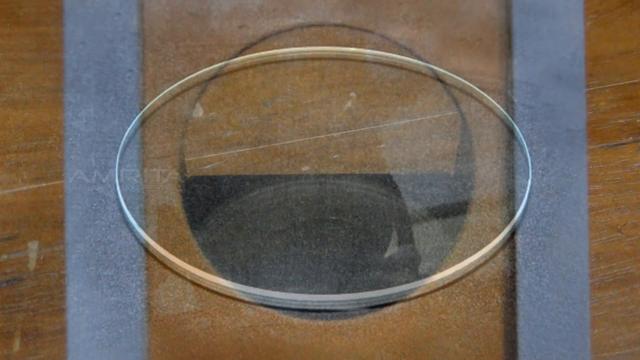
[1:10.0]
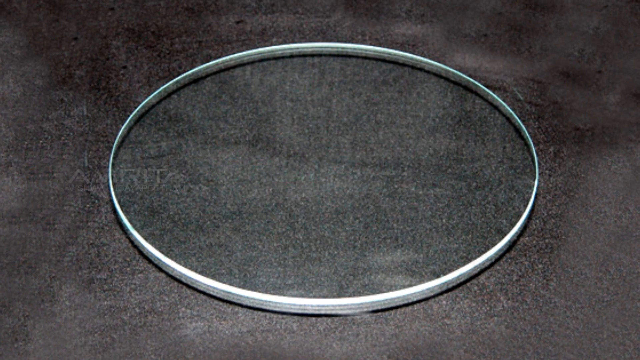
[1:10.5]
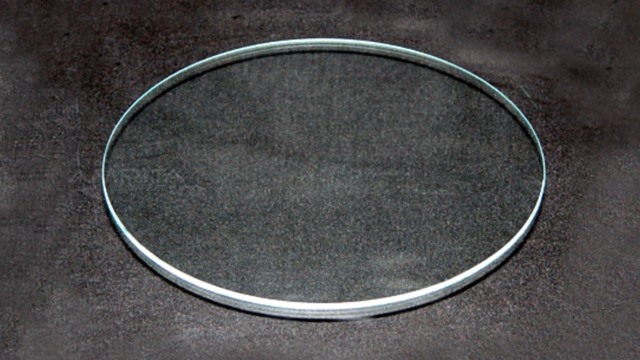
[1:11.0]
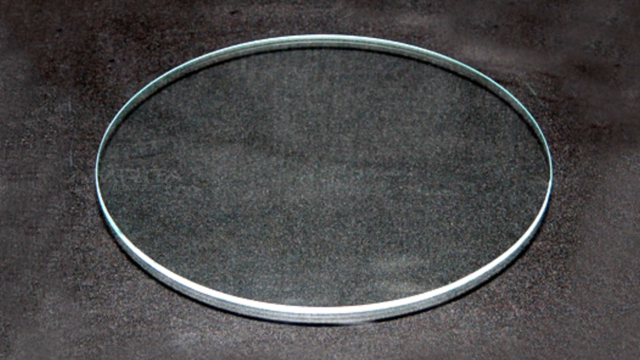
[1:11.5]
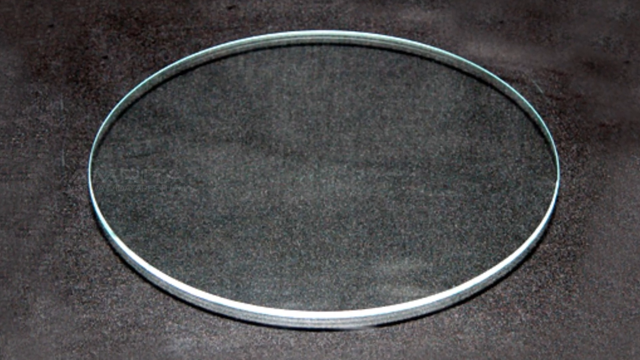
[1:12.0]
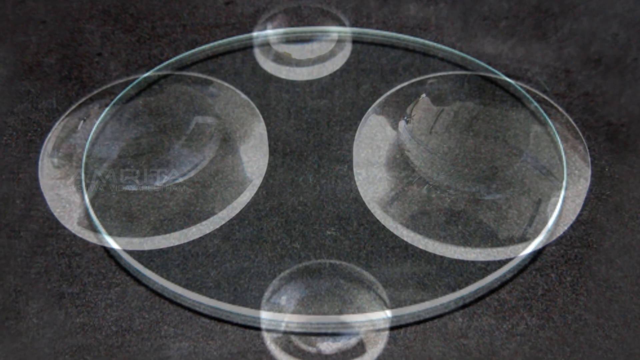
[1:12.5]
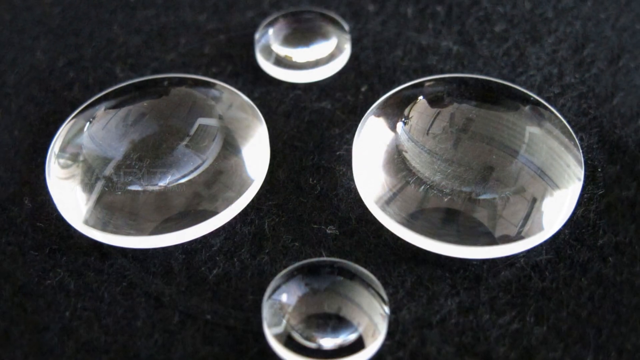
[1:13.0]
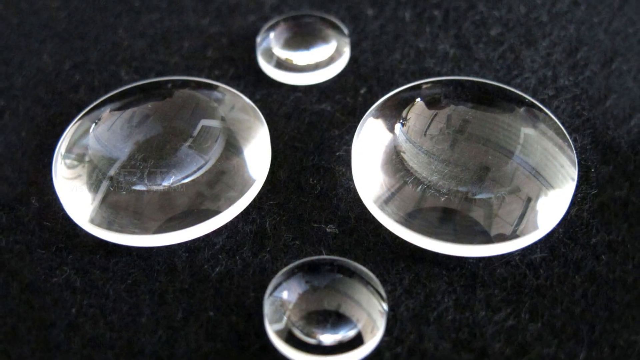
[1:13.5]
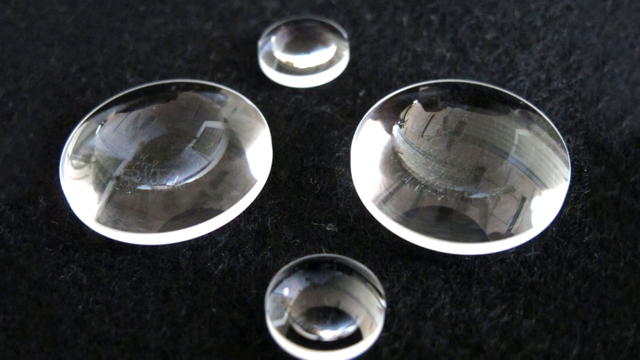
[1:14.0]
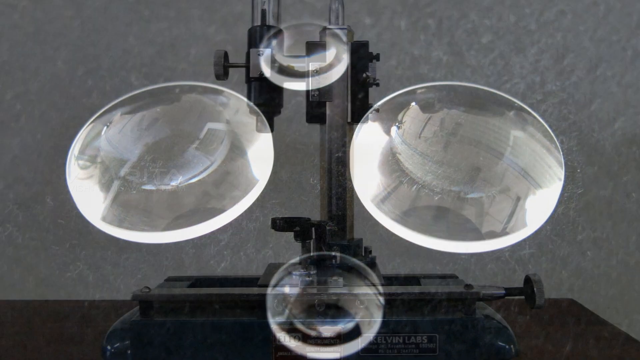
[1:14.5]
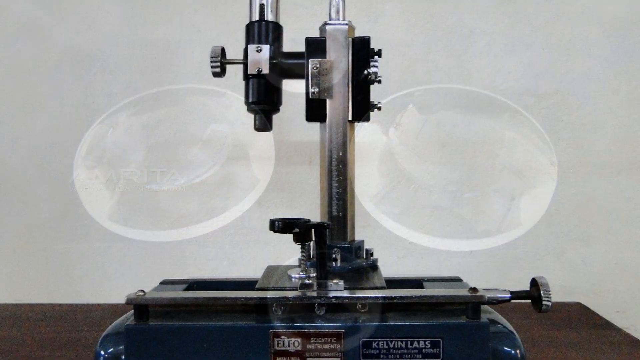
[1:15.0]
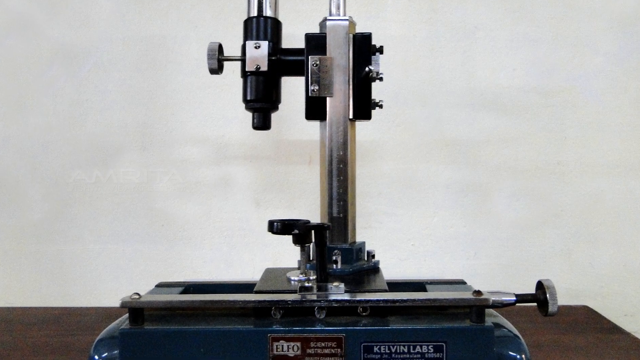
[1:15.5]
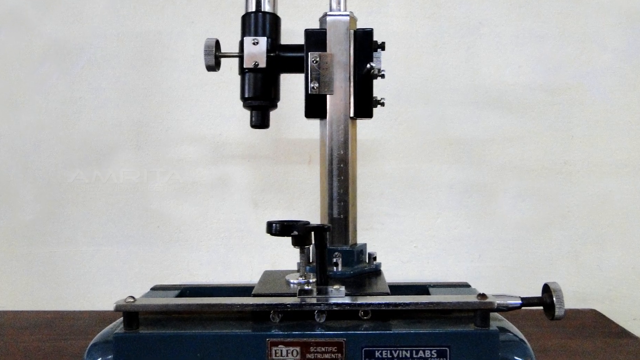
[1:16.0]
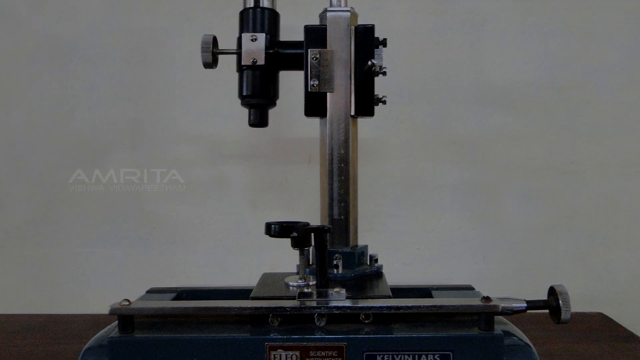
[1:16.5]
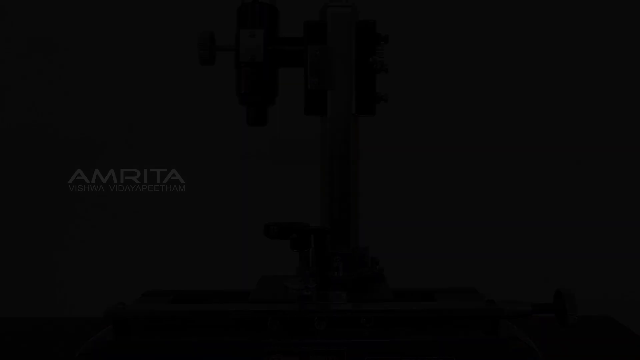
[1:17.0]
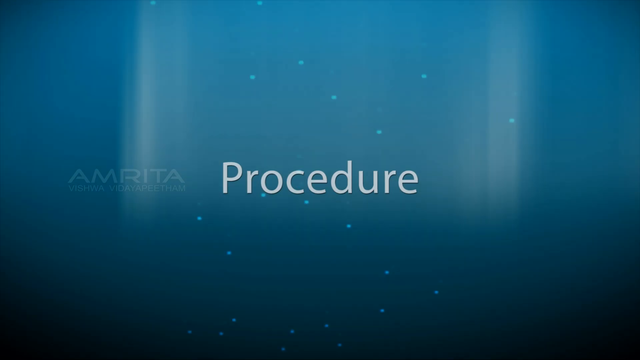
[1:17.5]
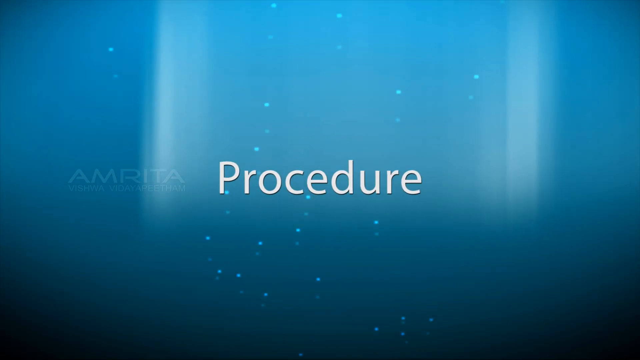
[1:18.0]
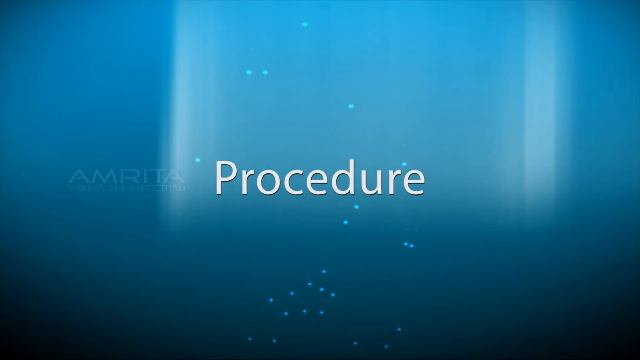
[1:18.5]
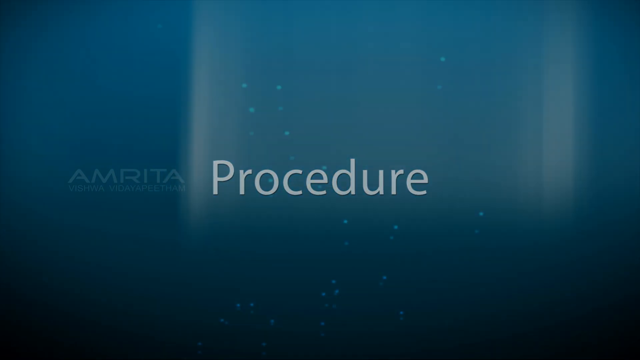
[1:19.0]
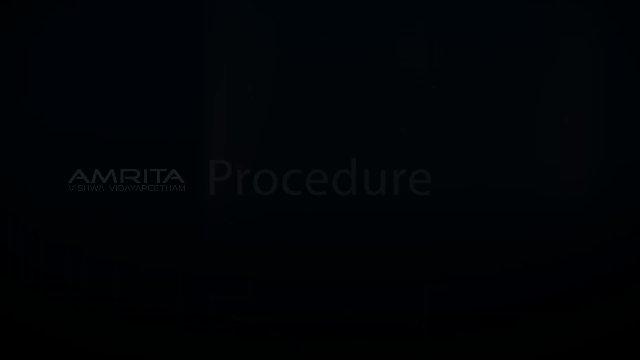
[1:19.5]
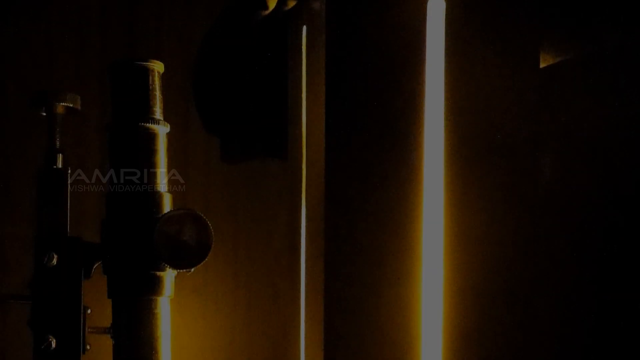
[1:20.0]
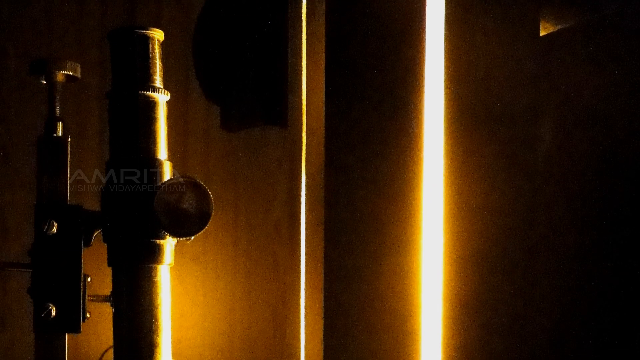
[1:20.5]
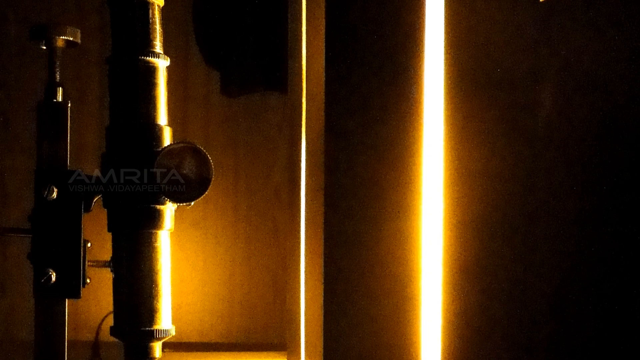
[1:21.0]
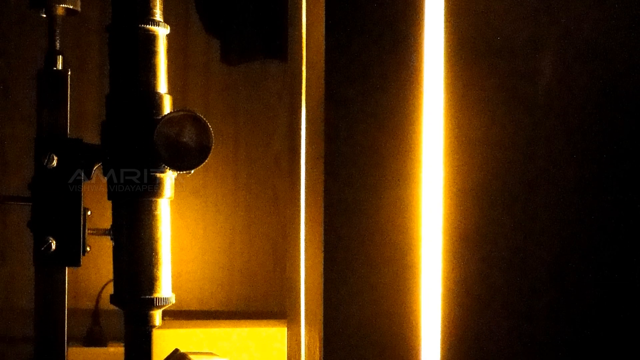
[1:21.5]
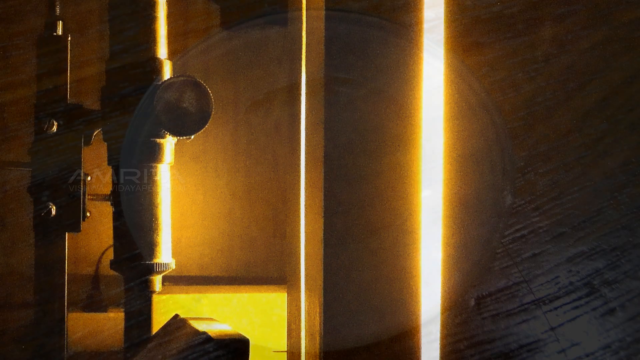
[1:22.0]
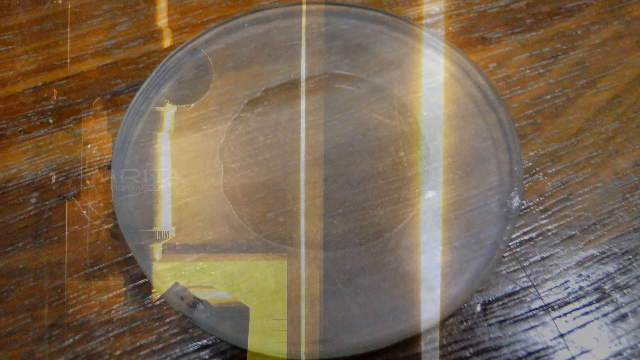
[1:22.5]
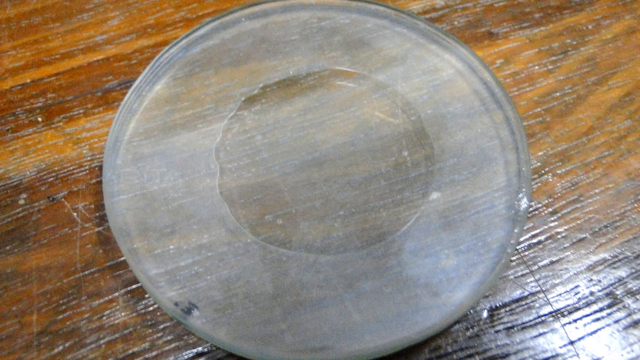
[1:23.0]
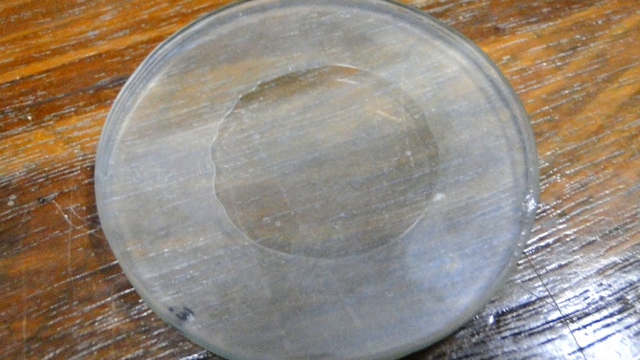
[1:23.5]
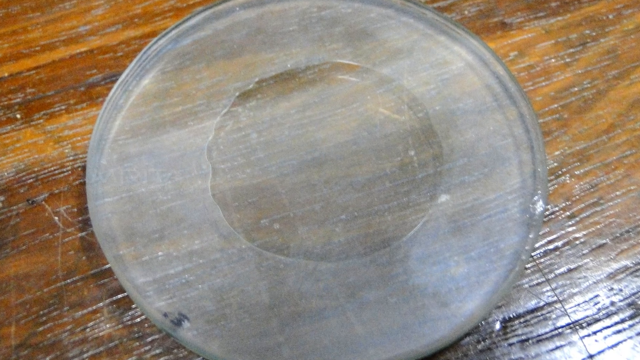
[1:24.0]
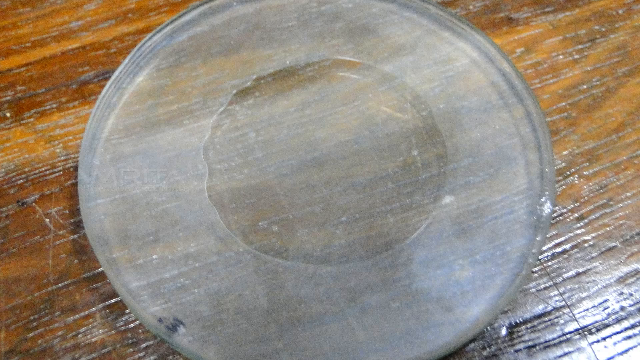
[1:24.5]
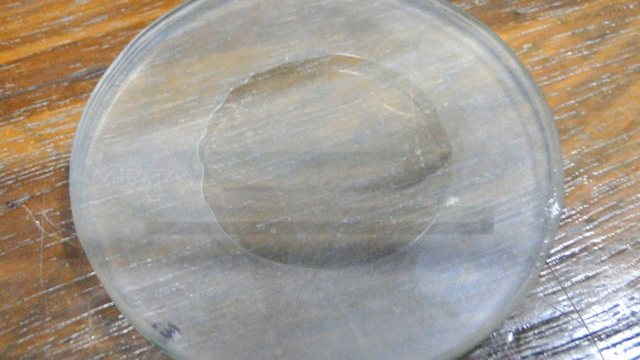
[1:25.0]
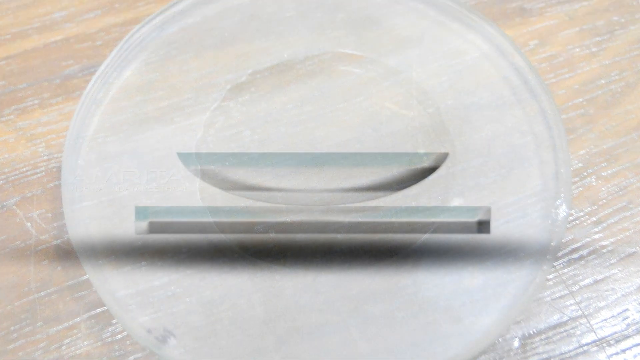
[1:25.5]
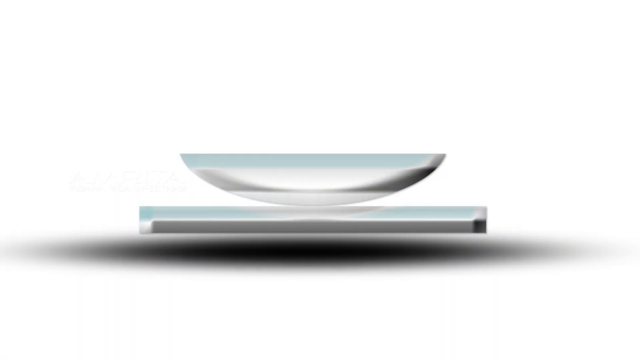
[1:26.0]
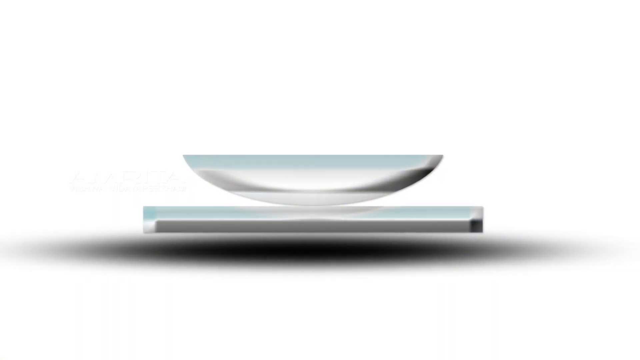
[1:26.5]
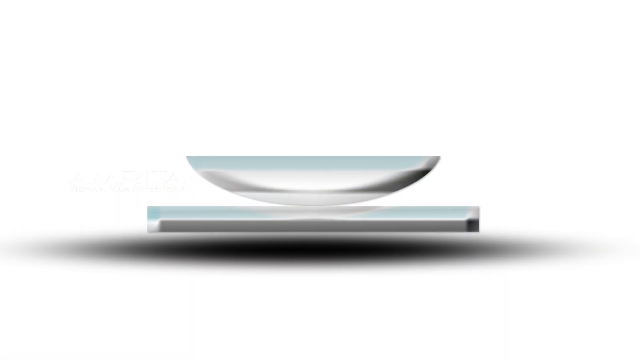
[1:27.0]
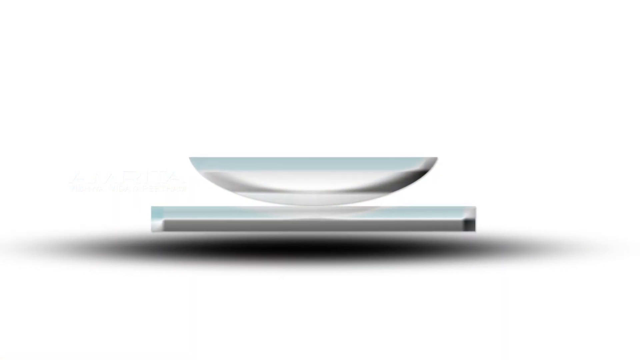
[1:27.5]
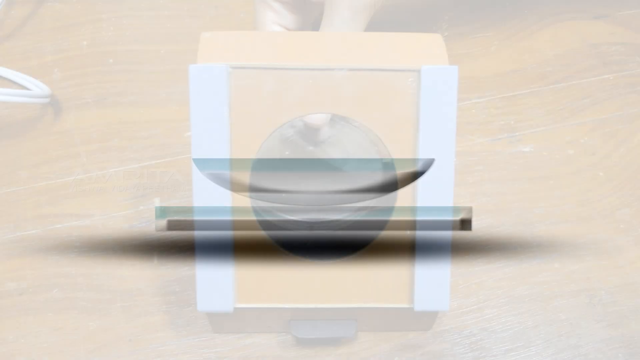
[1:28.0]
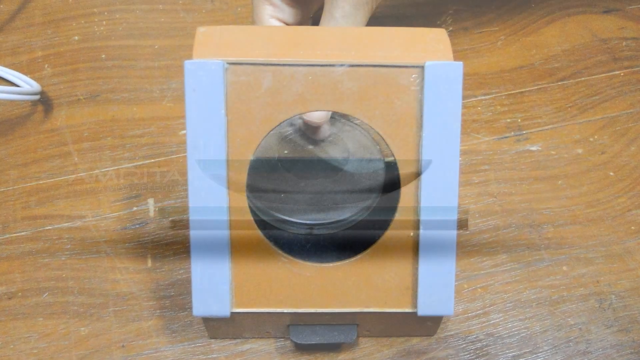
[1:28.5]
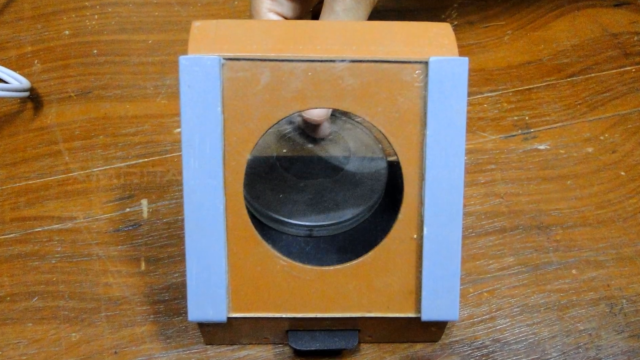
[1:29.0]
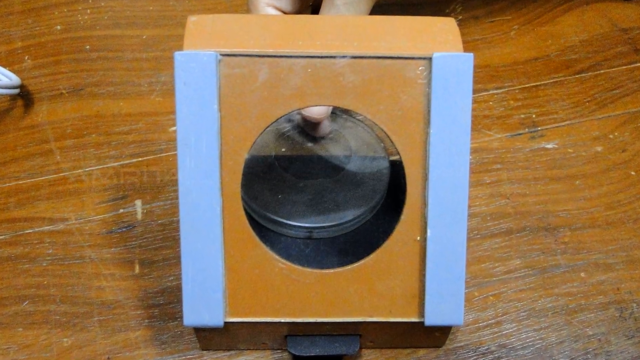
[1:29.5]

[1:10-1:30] A computer-generated image shows a silver hoop on a black backdrop. It changes to a black backdrop with four silvery-white circles, two really big and two smaller, forming something like a cross pattern. That fades out to a black-and-white image of a microscope, positioned front and center. Next is a blue background with small white bubbles rising from the bottom and "procedure" in white font in the middle. This fades to black, and the camera pans from top to bottom over a dark room with a microscope on the left. The microscope is only visible because a slit in a curtain lets in orange and yellow light that falls on it.